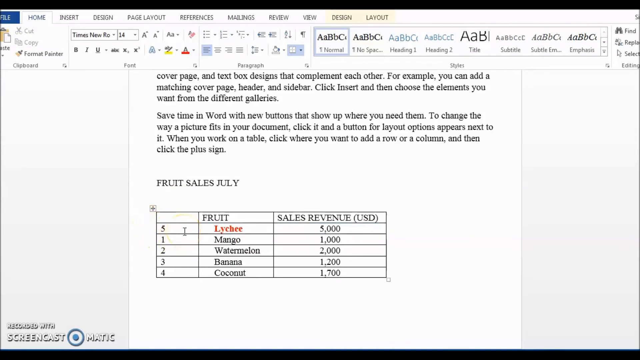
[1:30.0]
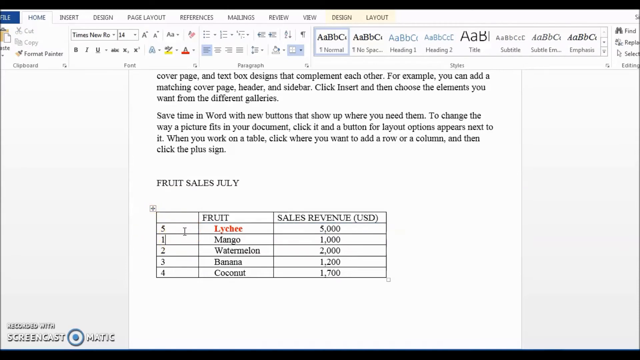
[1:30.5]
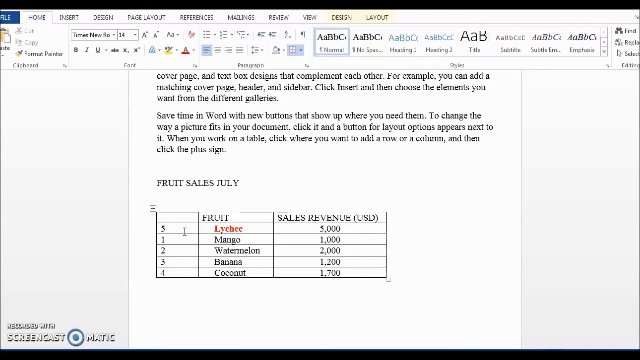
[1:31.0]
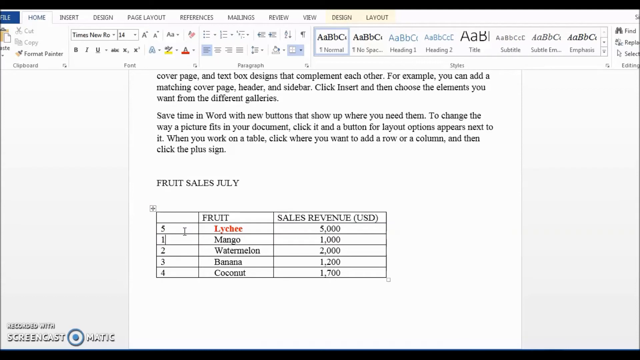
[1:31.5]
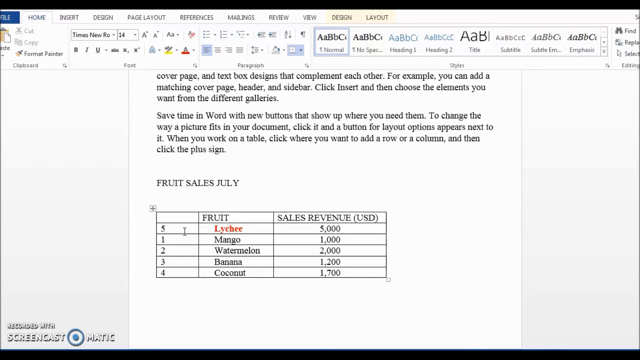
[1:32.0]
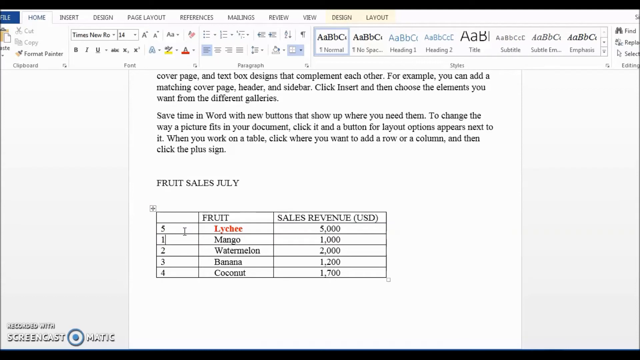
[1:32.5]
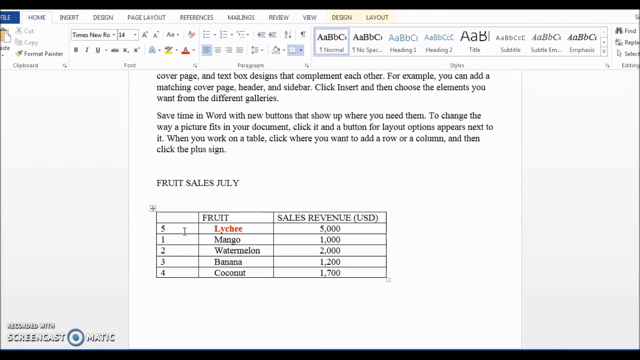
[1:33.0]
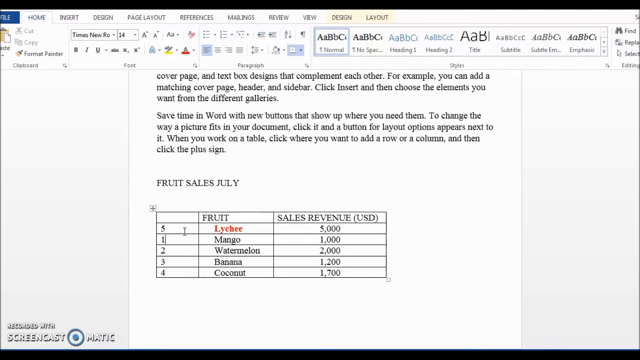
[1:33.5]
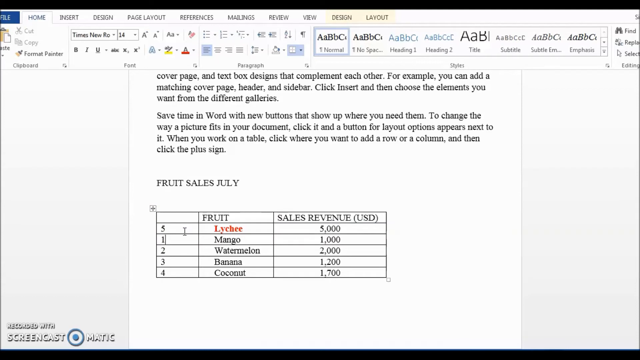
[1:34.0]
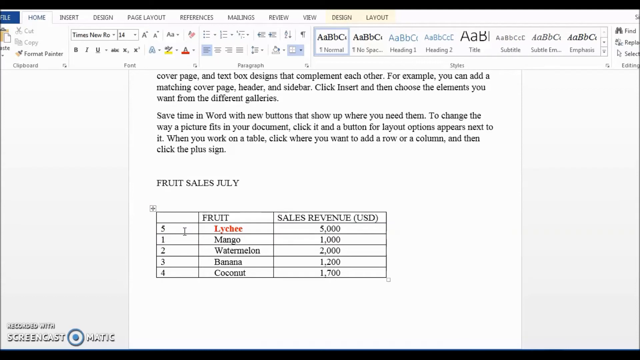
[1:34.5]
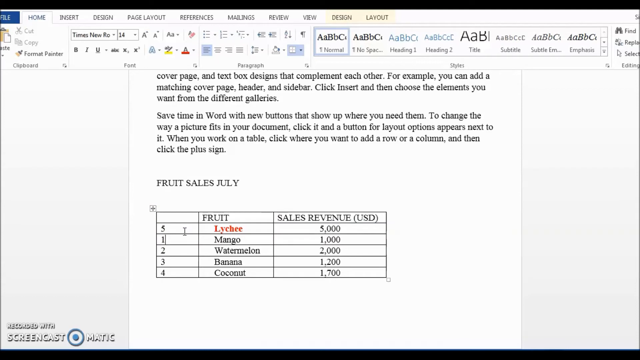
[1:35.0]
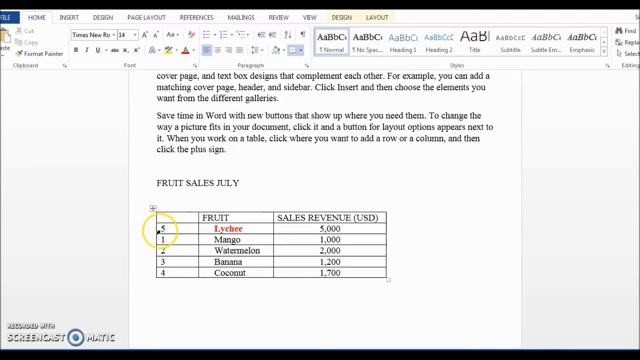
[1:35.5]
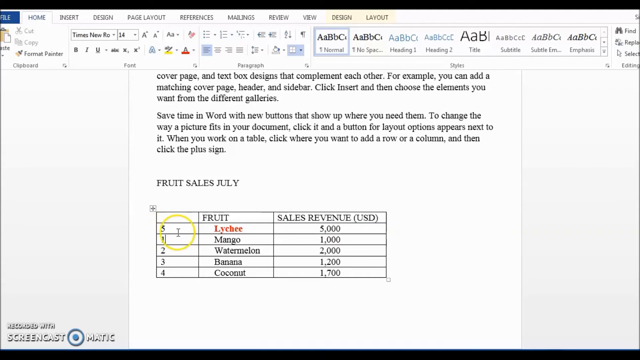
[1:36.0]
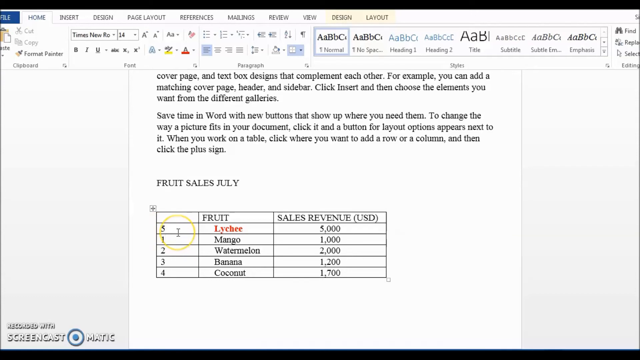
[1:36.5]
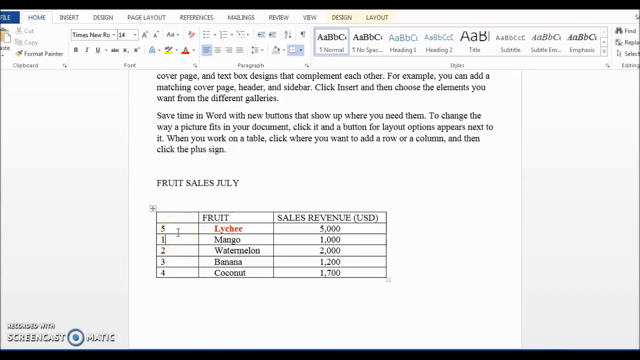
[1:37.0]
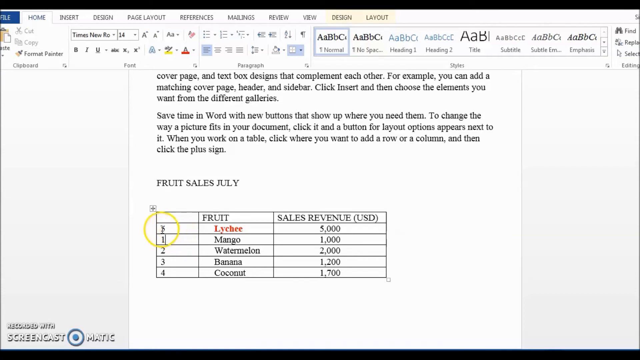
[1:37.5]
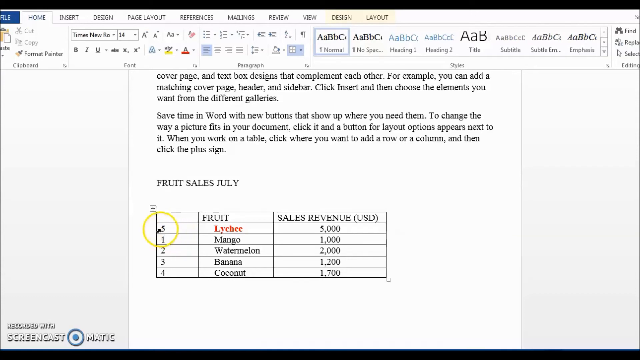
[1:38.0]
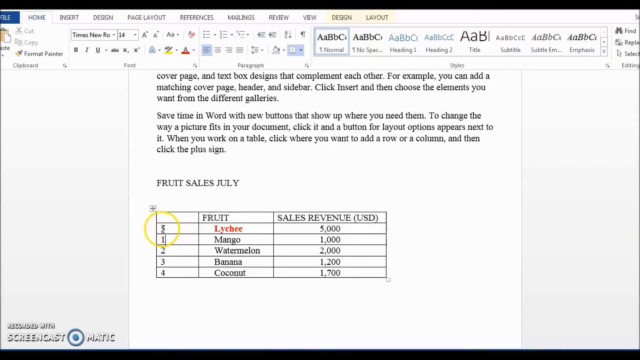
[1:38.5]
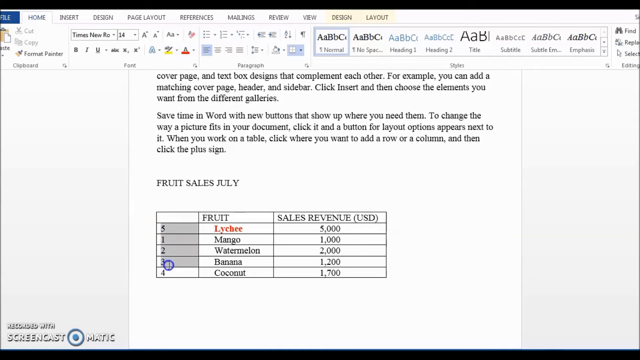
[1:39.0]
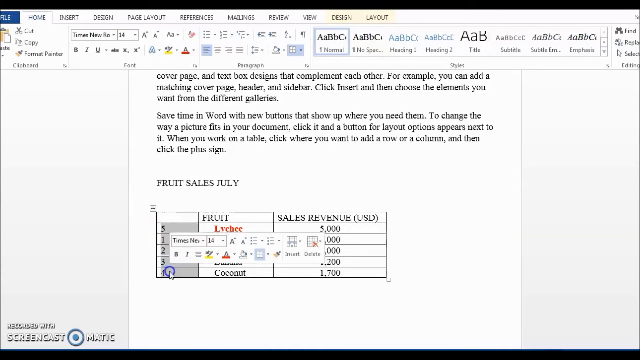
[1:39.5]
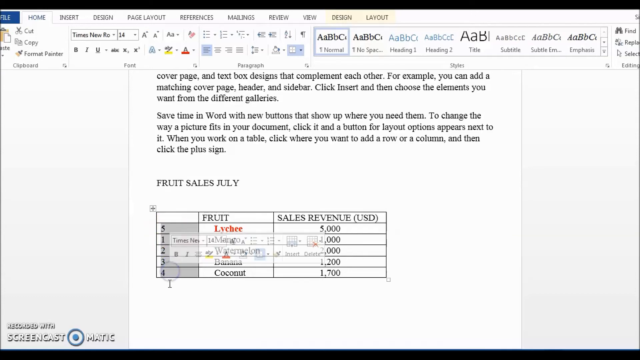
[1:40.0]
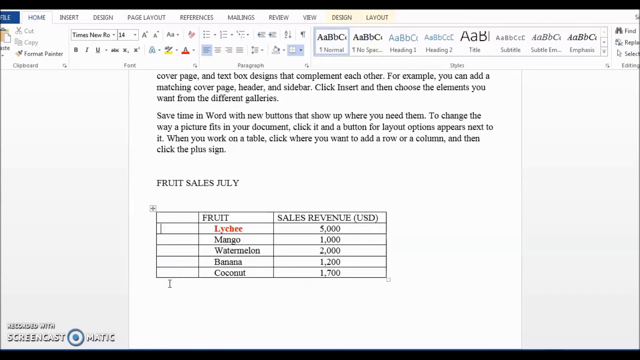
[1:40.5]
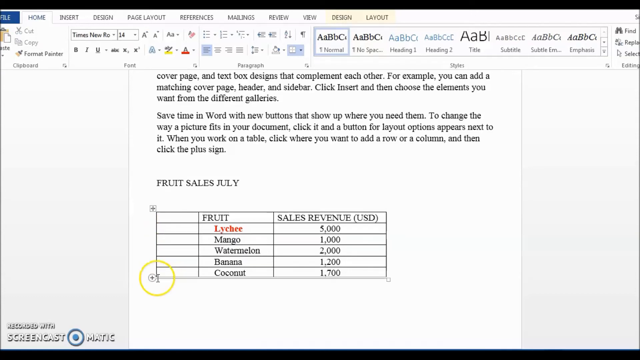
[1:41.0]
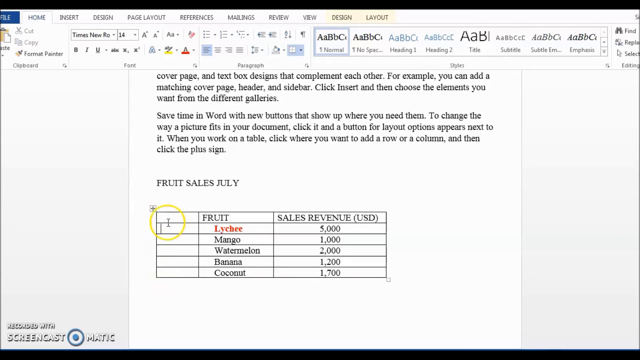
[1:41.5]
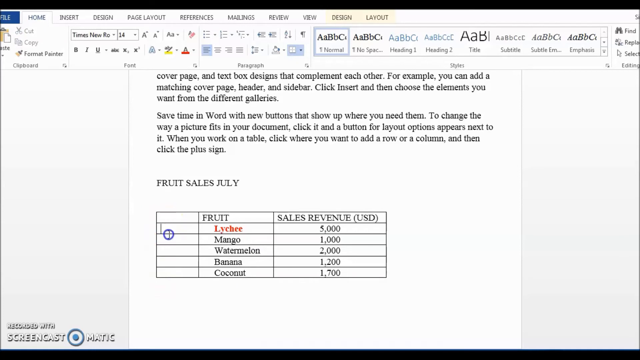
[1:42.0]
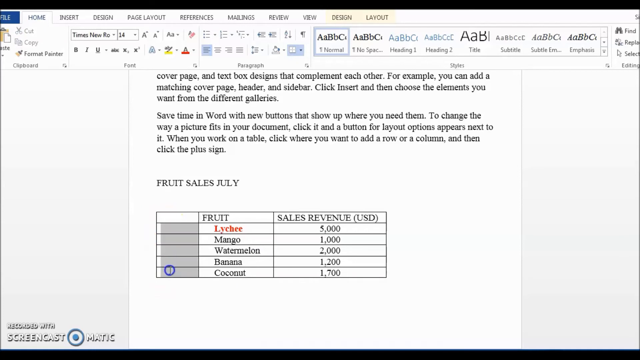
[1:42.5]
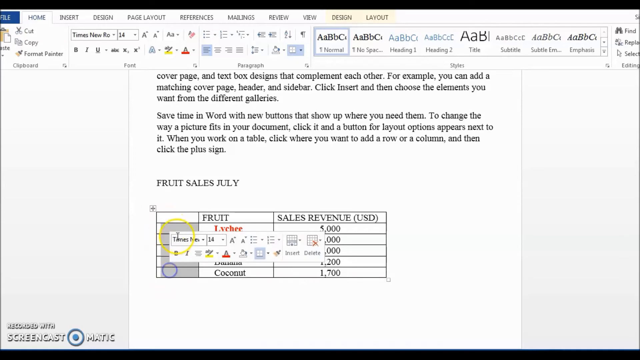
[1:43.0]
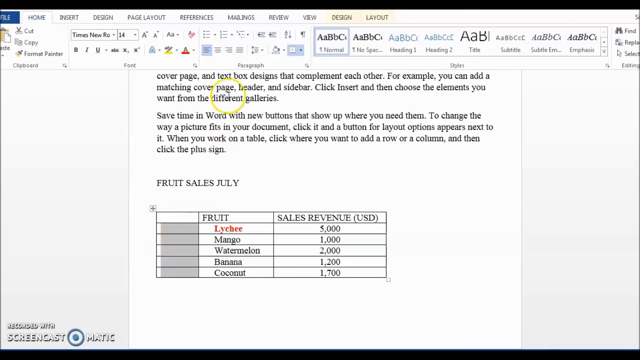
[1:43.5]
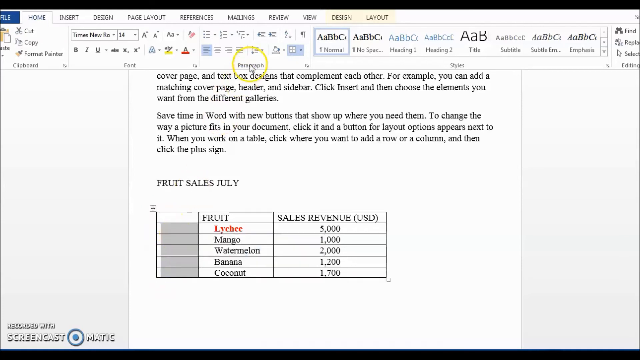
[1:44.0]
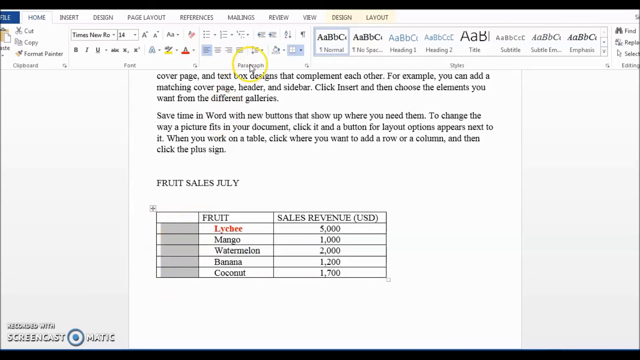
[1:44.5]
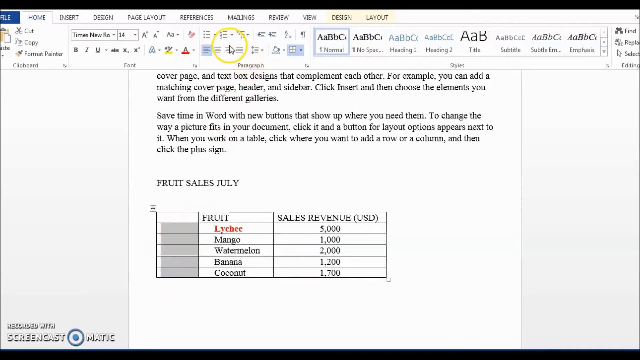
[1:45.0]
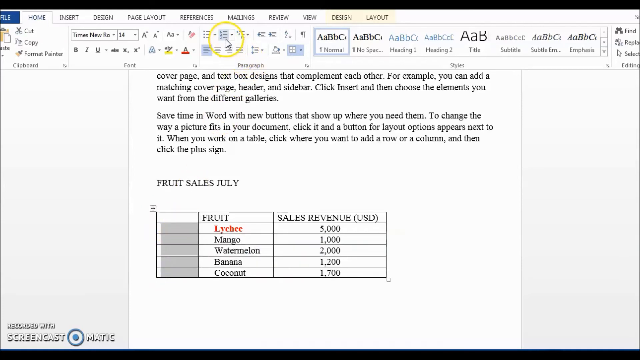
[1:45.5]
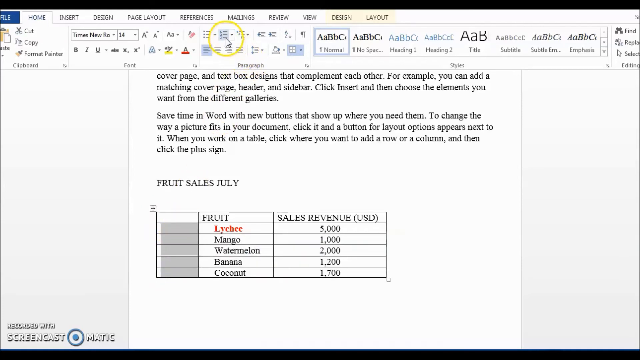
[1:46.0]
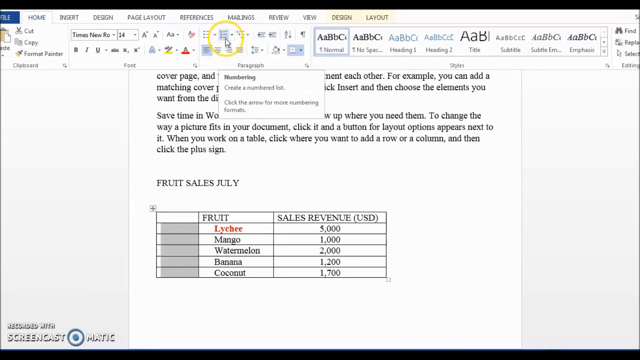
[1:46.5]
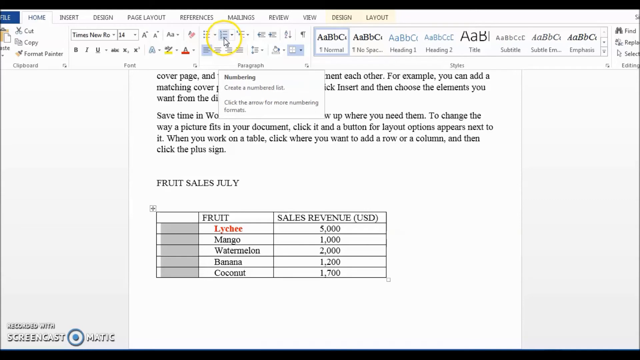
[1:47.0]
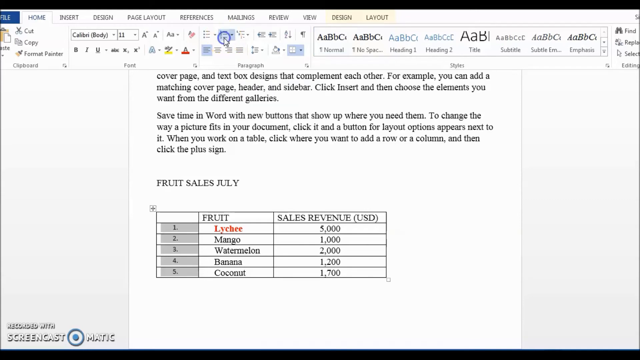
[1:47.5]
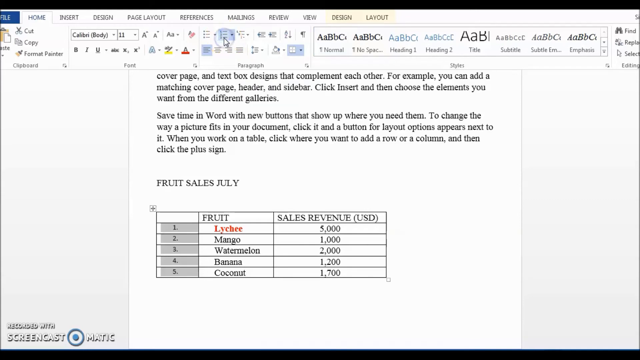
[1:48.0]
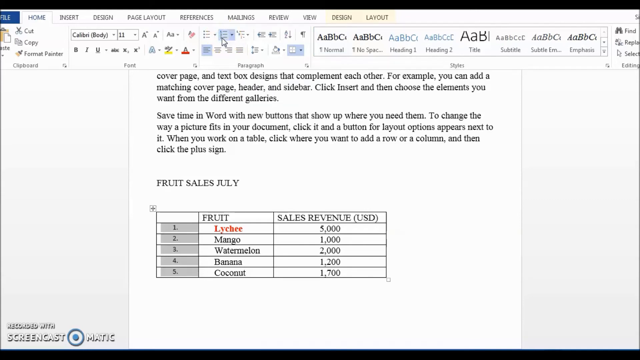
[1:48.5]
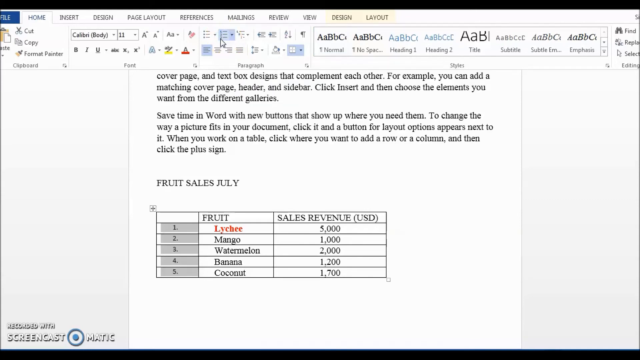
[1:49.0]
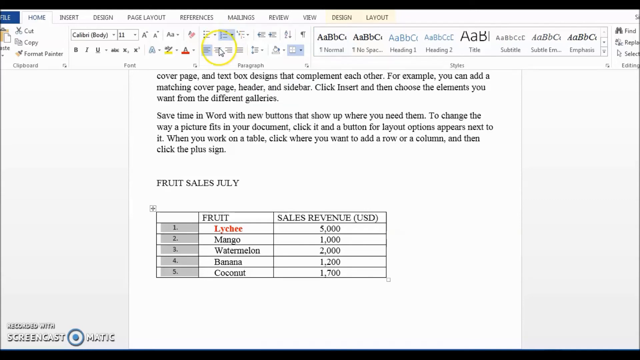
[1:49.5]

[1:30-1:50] The presenter demonstrates a basic copy-and-paste feature in a Microsoft Word document with an embedded spreadsheet. Lychee, with sales revenue of $5,000, has been moved to the top of the list rather than the bottom. The Word version appears to be a very old one.